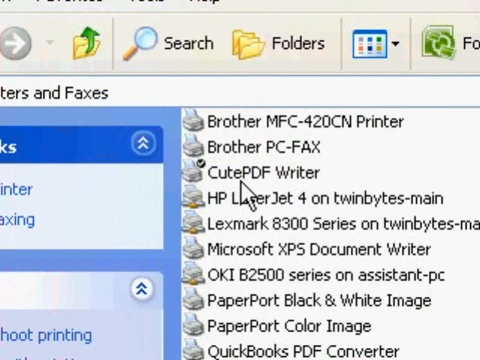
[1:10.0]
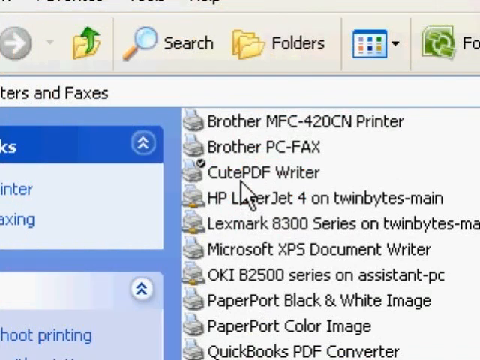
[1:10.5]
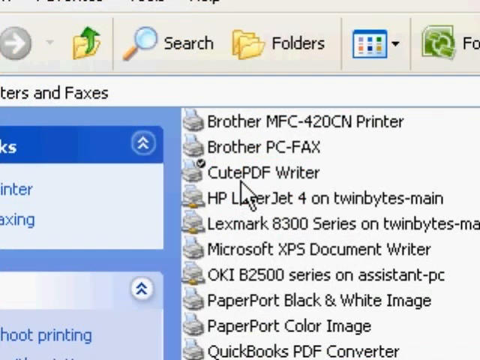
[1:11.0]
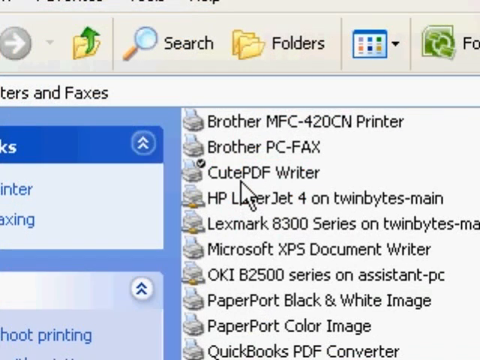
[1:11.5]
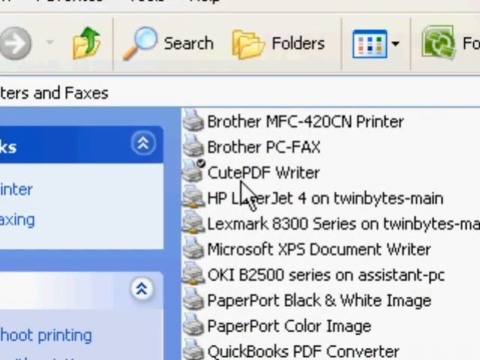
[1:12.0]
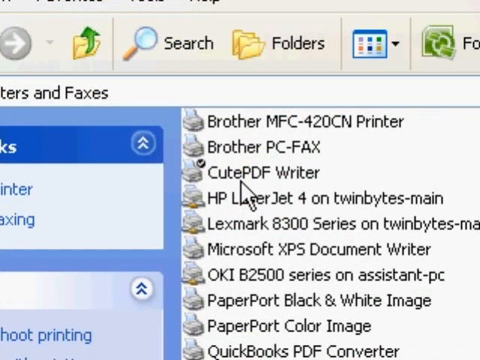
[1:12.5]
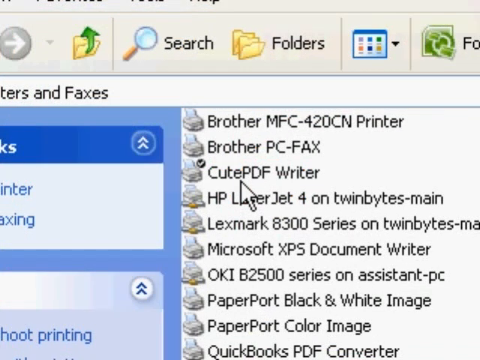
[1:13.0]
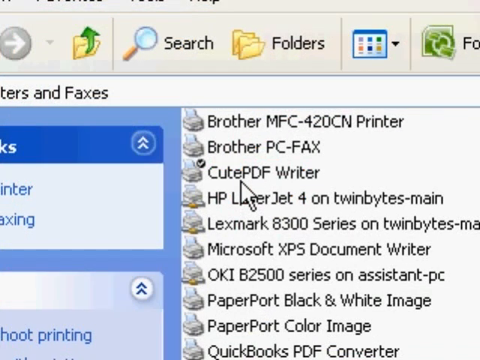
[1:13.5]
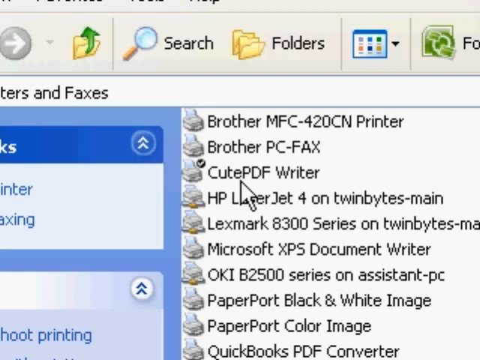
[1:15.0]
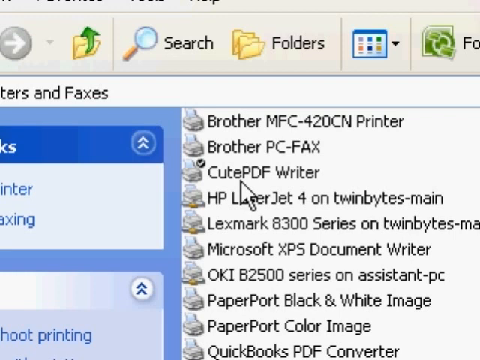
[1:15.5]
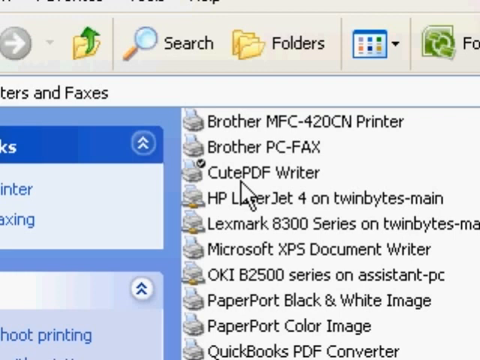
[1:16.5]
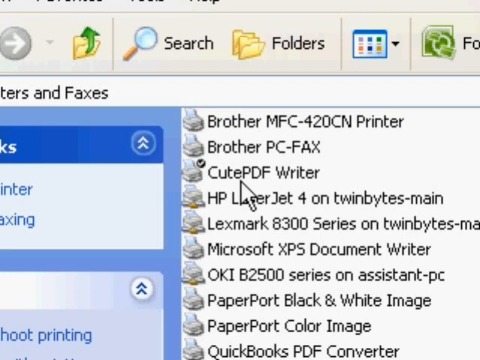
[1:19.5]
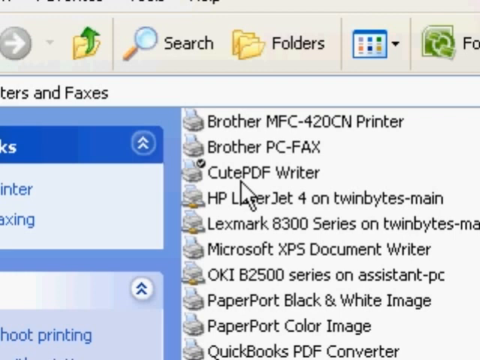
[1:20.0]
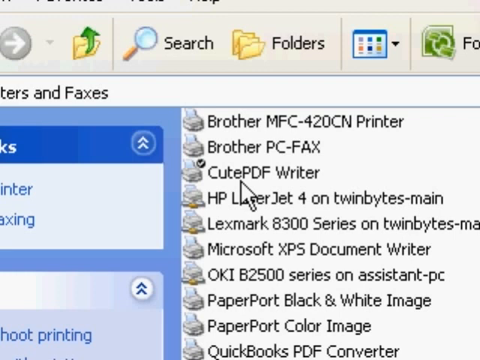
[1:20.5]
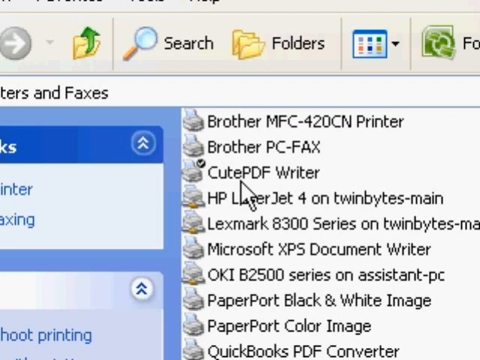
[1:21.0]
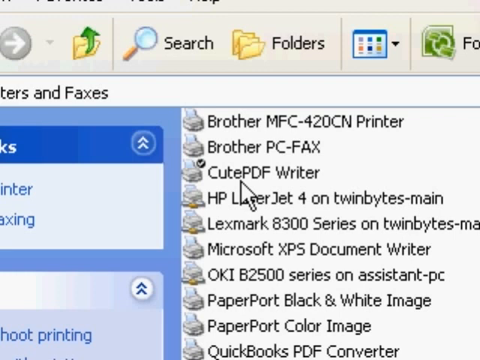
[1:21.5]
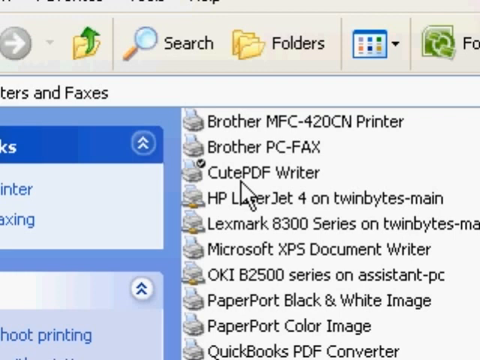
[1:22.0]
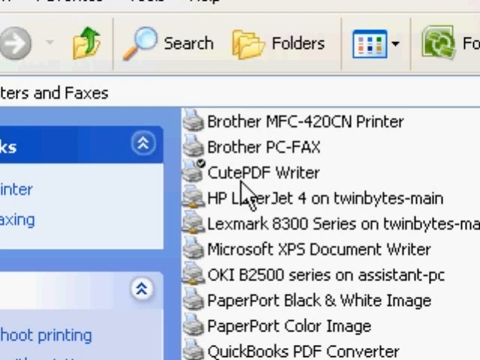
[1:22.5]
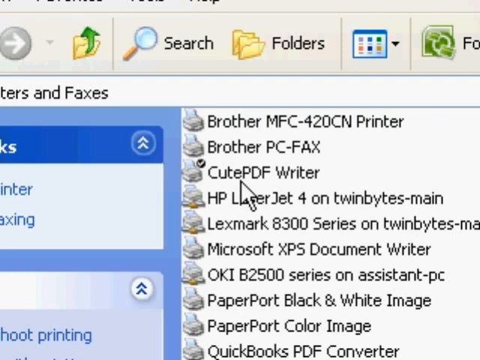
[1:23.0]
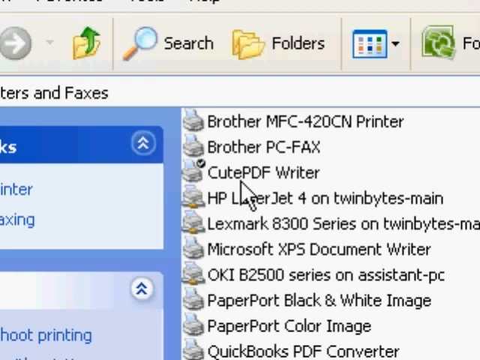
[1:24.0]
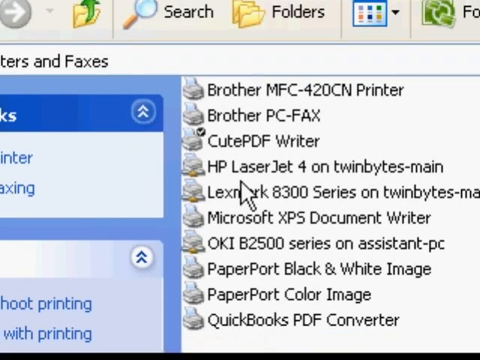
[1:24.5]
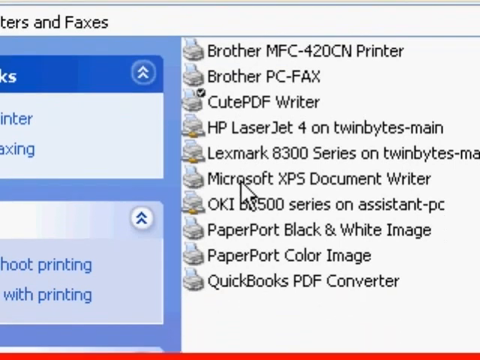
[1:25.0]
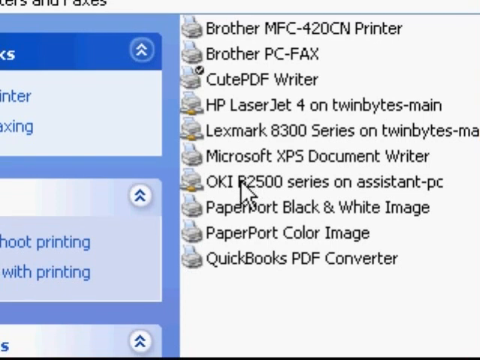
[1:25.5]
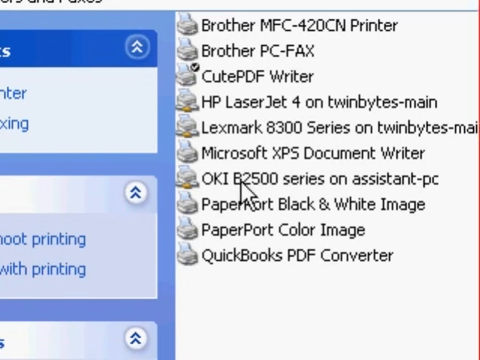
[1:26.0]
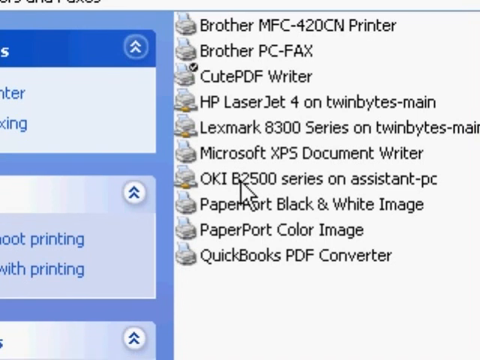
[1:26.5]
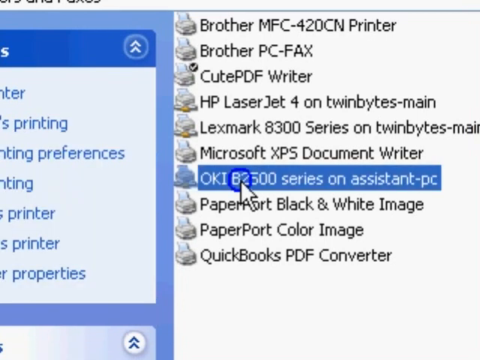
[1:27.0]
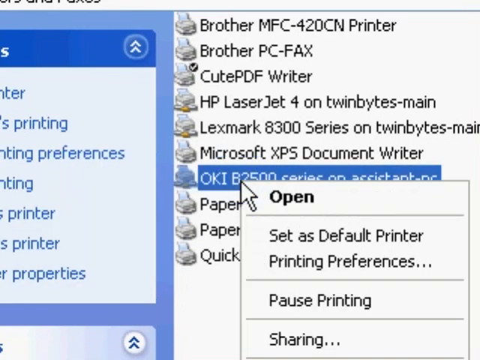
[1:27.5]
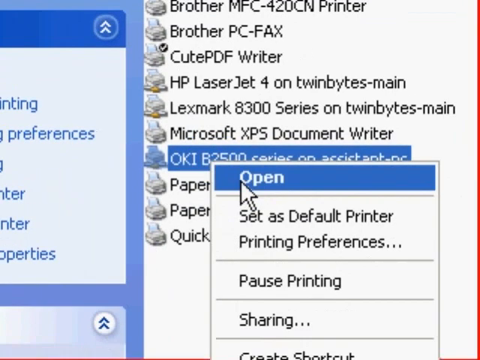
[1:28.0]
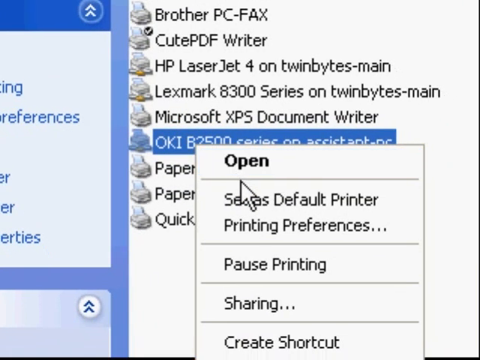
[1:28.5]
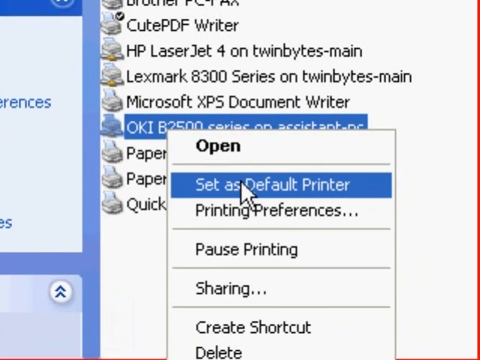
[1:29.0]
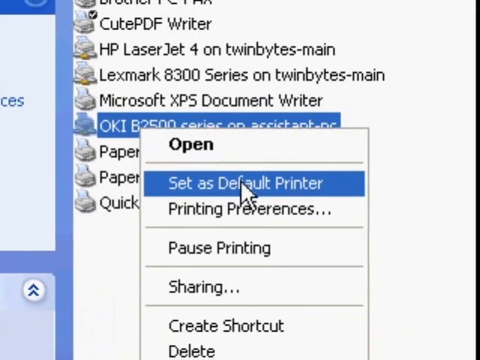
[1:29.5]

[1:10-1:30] A close-up of a Windows PC monitor shows the section for printers and faxes. At the top is a border with a right-facing arrow; to the right of it is a folder, to the right of that a search icon, and to the right of that more folders. Beneath it is a list of printers, faxes, a document writer, and black and white image and color image Paper port entries. The cursor scrolls the page up, clicks, opens an item and sets the default printer. The multiple entries in this control panel section are all represented by what appear to be printer icons. From the top, the list reads Brother MFC-420CN Printer, Brother PC-FAX, Cute PDF Writer, which has a check next to it, HP LaserJet 4 on TwinBytes Main, and Lexmark 8300 series on TwinBytes Main.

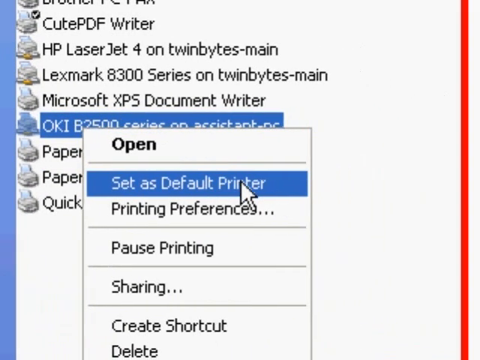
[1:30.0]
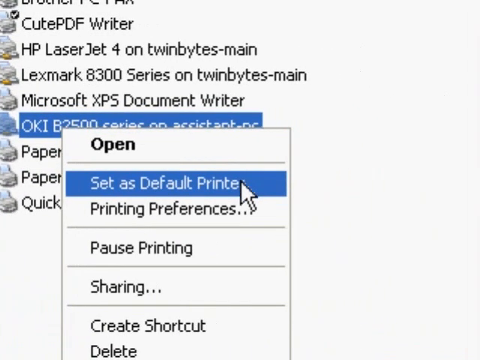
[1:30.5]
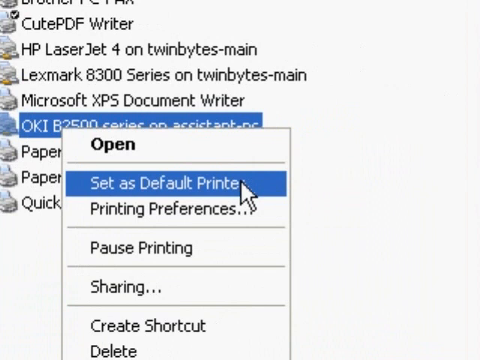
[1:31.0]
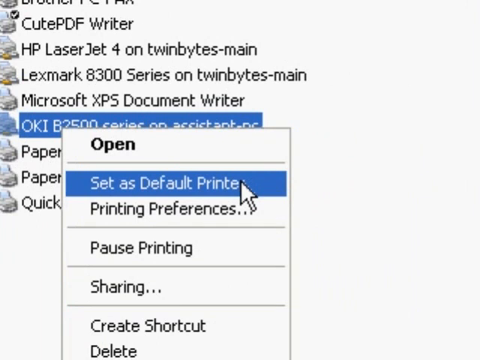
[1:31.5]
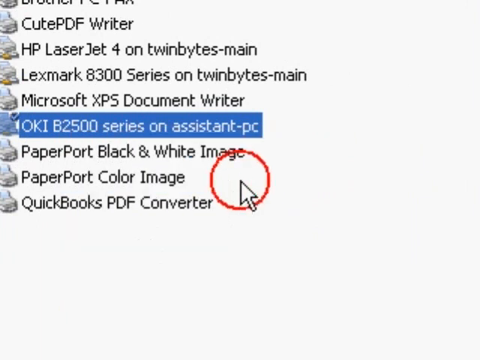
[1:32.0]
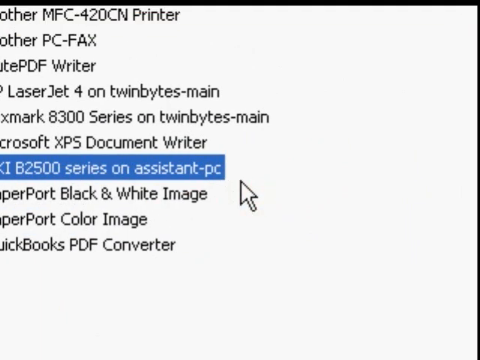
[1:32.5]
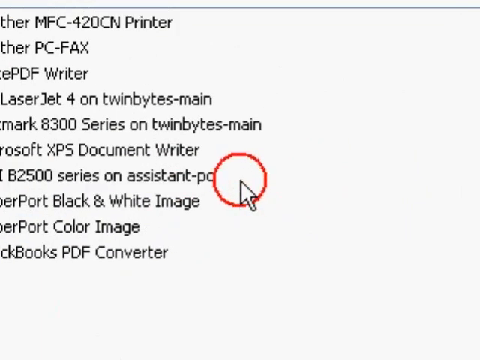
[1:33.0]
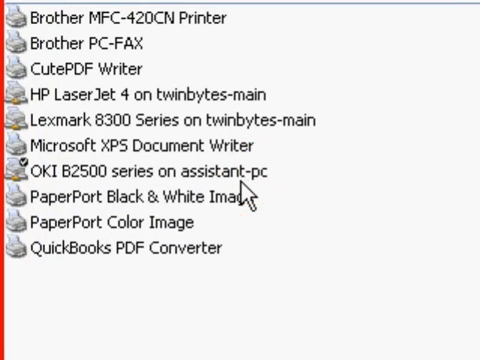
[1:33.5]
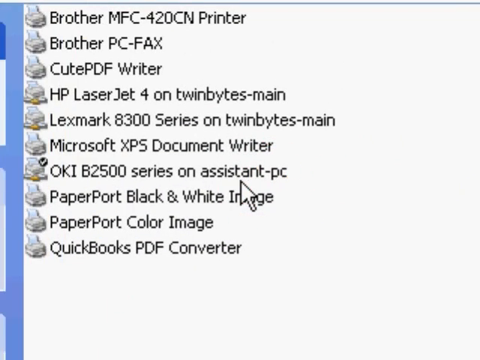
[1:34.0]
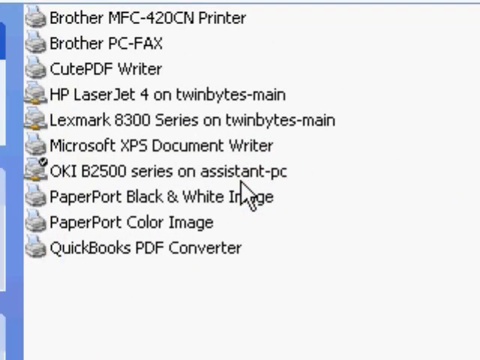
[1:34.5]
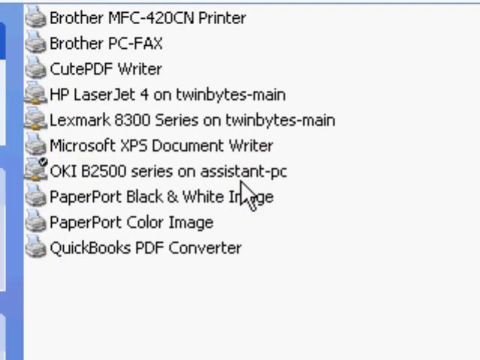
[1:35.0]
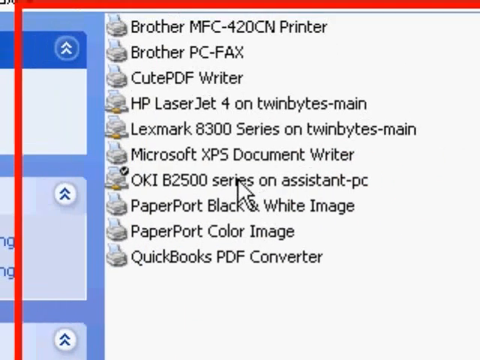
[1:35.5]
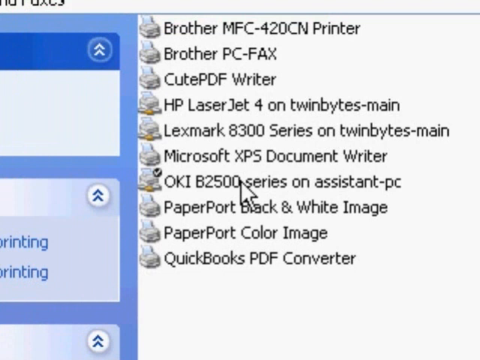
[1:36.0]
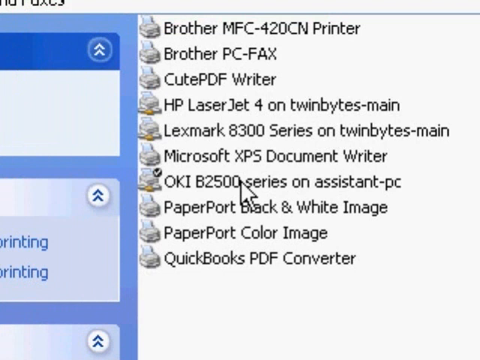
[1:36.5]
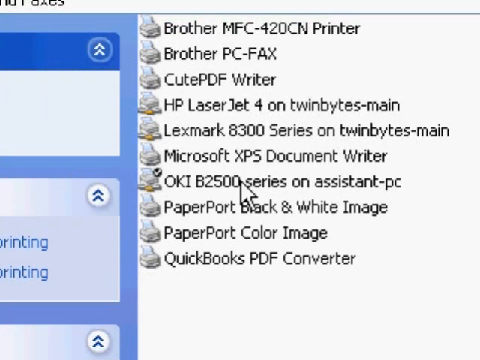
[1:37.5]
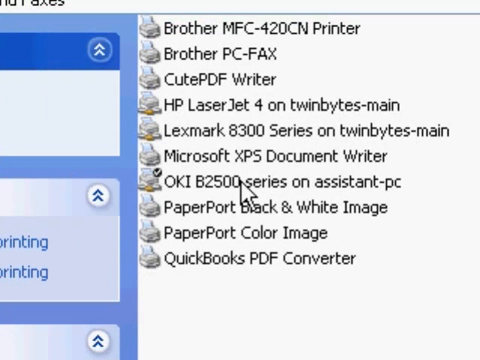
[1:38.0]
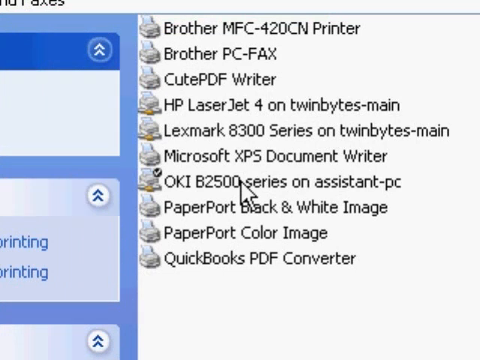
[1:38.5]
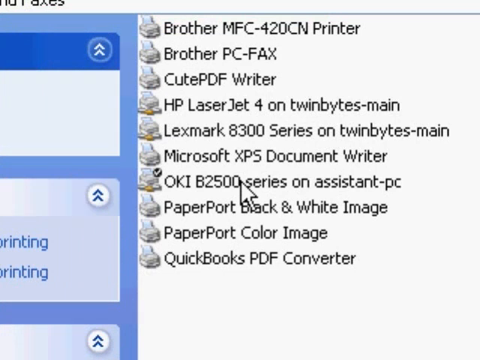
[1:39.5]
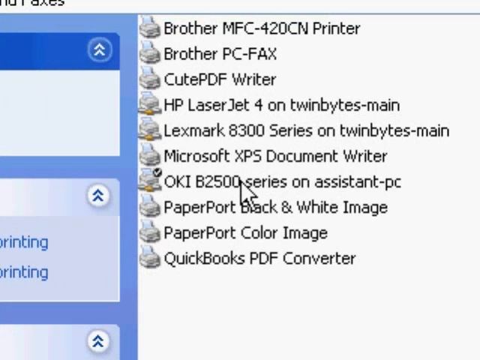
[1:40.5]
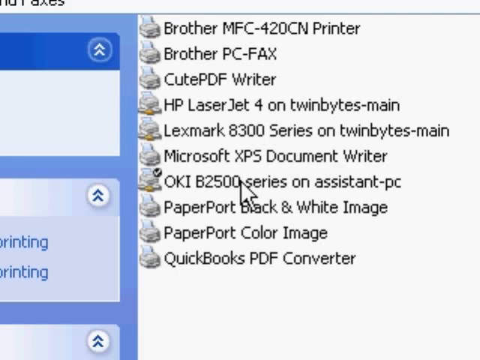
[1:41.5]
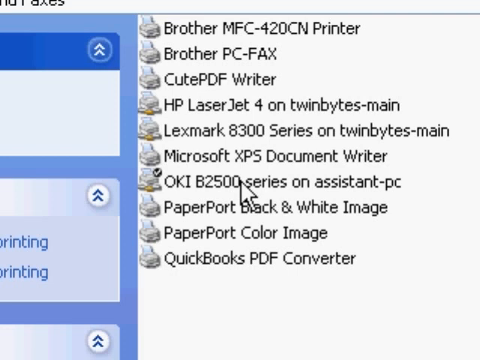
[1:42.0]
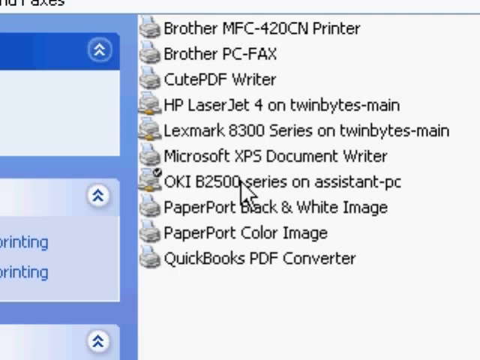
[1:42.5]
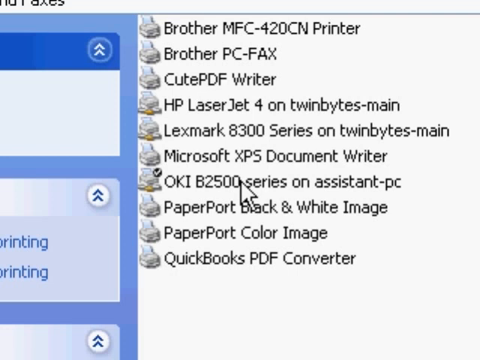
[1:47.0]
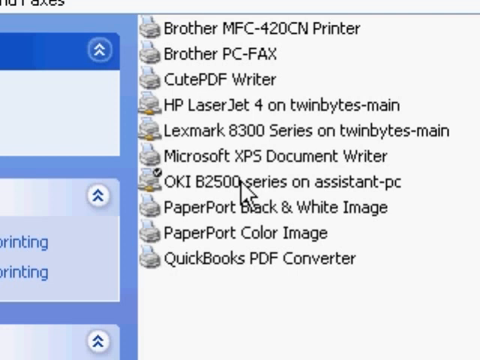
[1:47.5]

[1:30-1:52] A list of printers and document writers is shown in the control panel of a Windows PC. A cursor has highlighted OKI B2500 series and set it as the default printer. The cursor then moves over to the list, which includes Brother MFC-420CN Printer, Brother PC-FAX, Cute PDF Writer, HP LaserJet 4 on TwinBytes Main, Lexmark 8300 Series on TwinBytes Main, Microsoft XPS Document Writer, OKI B2500 series on assist PC, which is checked, Paper port black and white image, Paper port color image, and QuickBooks PDF Converter. Next to the list are printer tasks, a toolbar at the top holds folders, search and more, and the main section is printers and faxes.